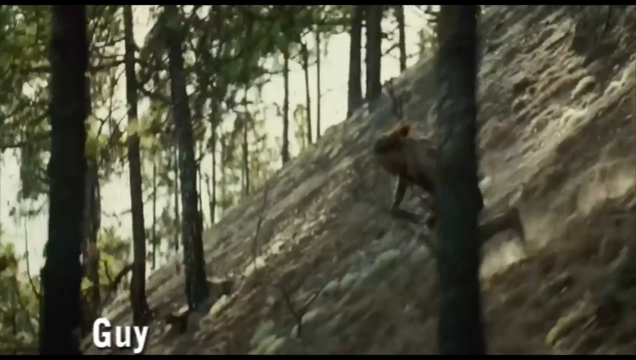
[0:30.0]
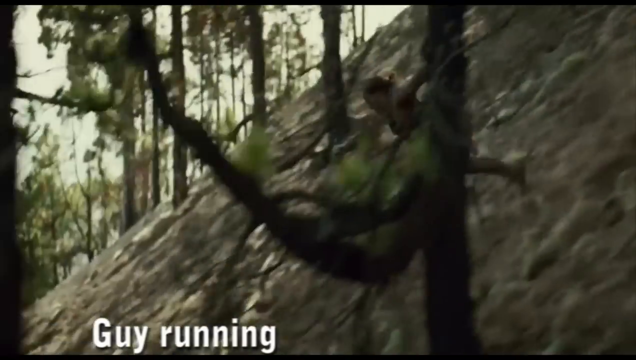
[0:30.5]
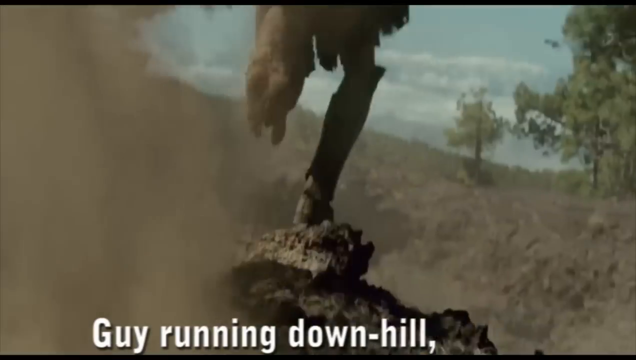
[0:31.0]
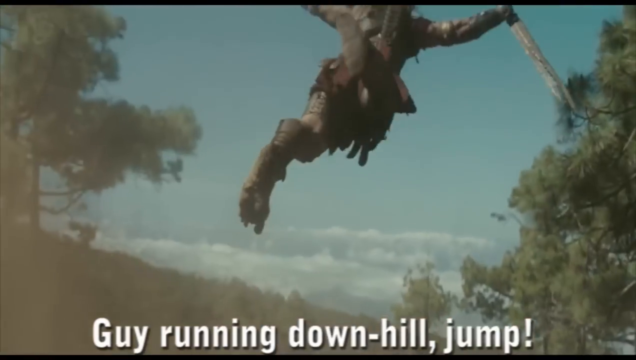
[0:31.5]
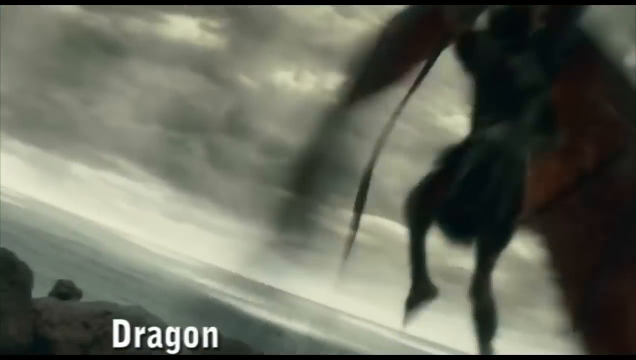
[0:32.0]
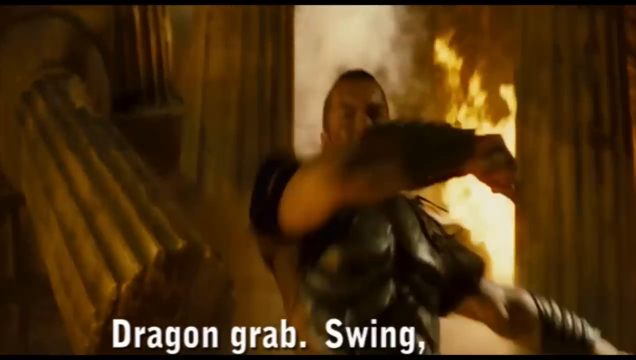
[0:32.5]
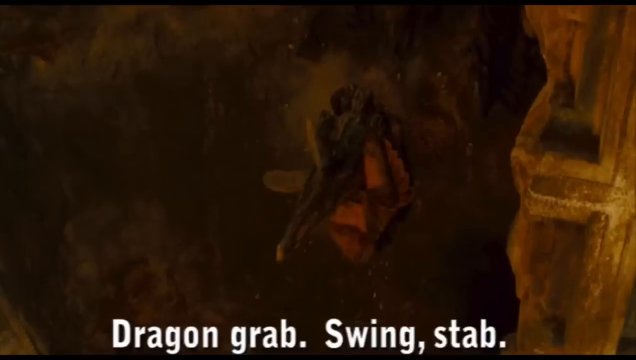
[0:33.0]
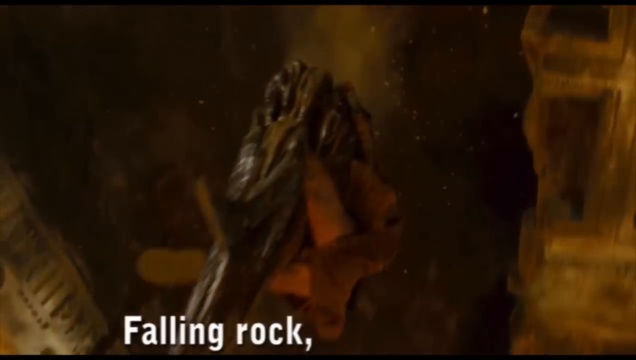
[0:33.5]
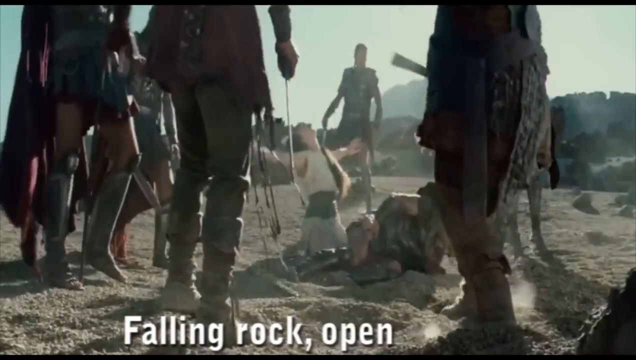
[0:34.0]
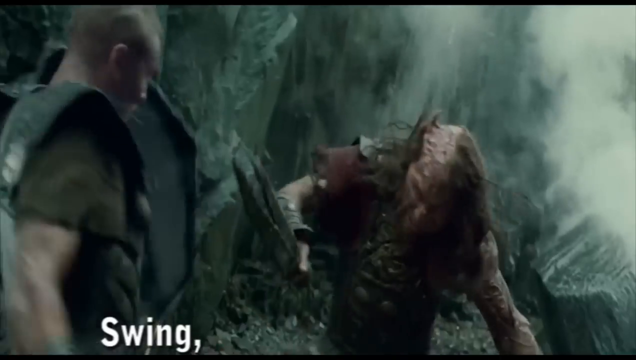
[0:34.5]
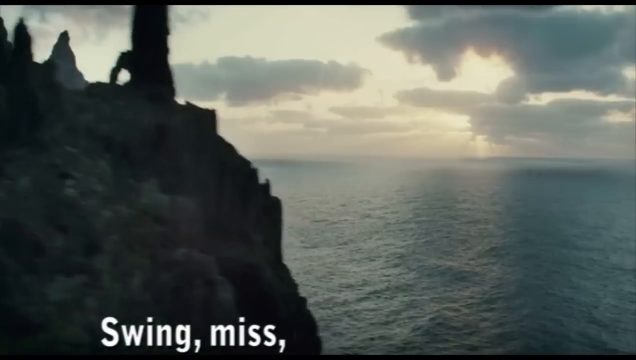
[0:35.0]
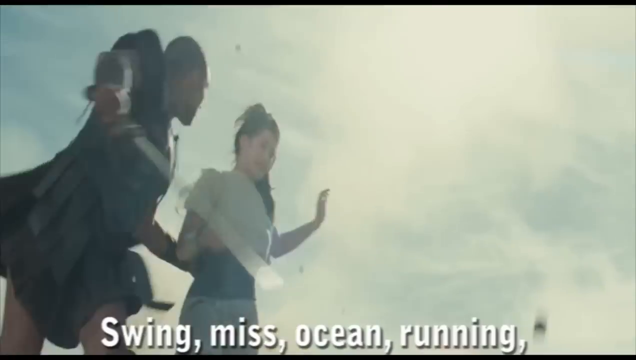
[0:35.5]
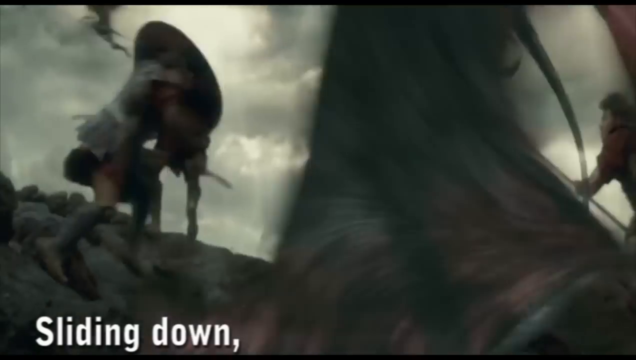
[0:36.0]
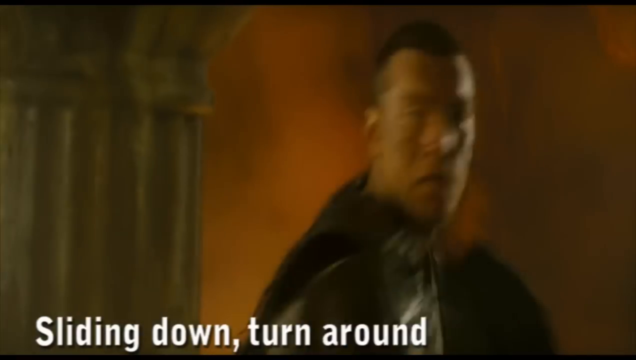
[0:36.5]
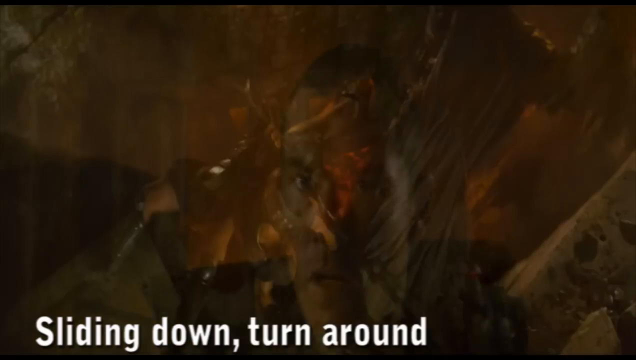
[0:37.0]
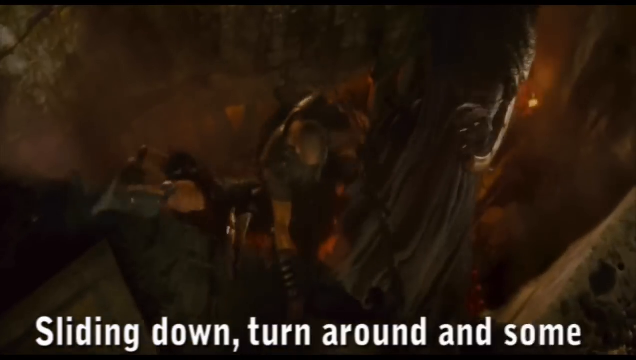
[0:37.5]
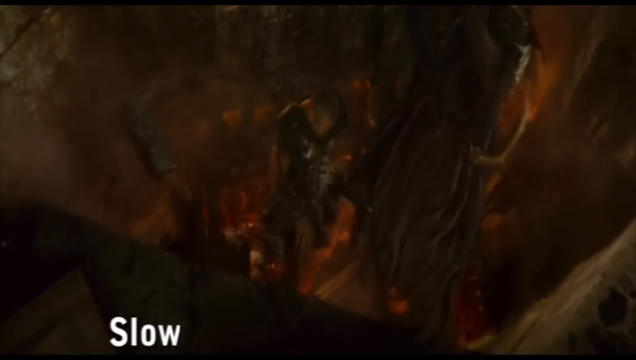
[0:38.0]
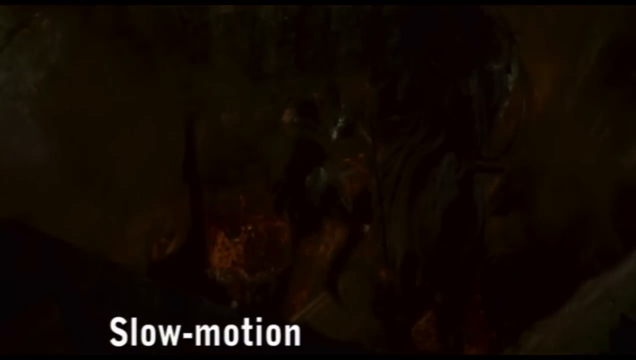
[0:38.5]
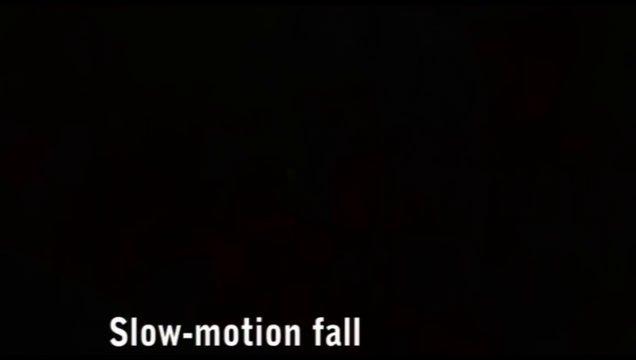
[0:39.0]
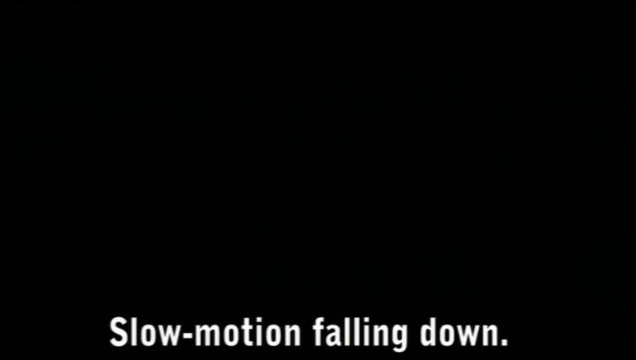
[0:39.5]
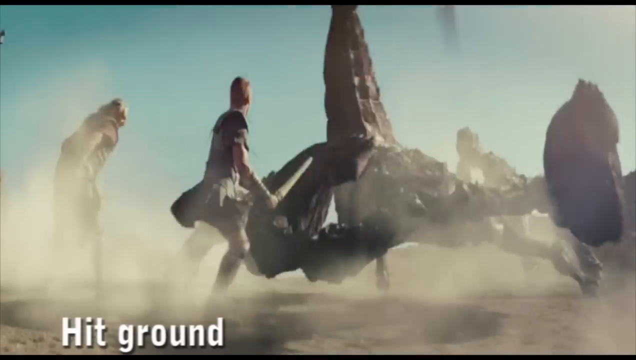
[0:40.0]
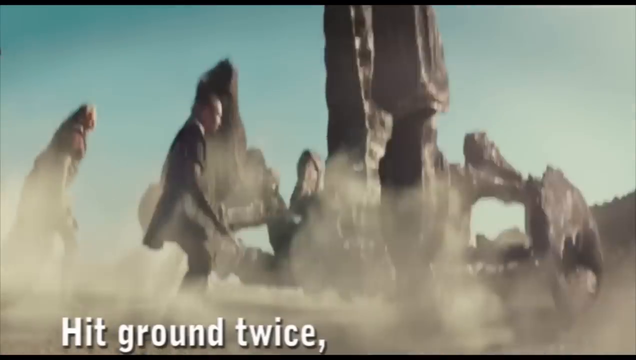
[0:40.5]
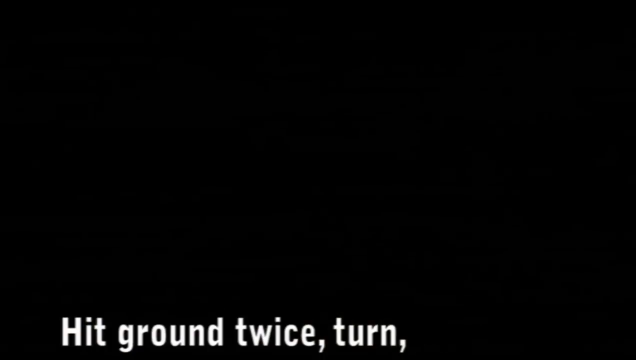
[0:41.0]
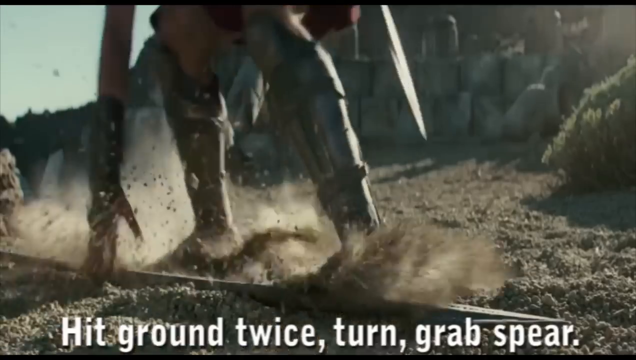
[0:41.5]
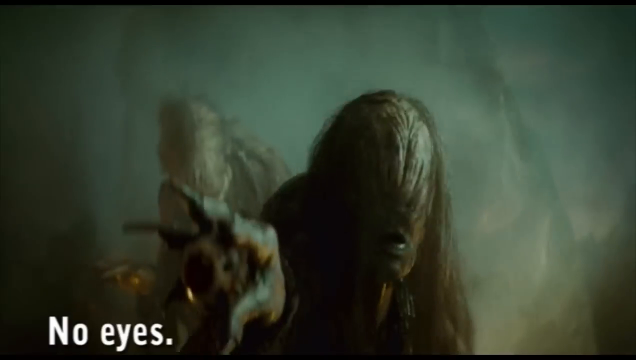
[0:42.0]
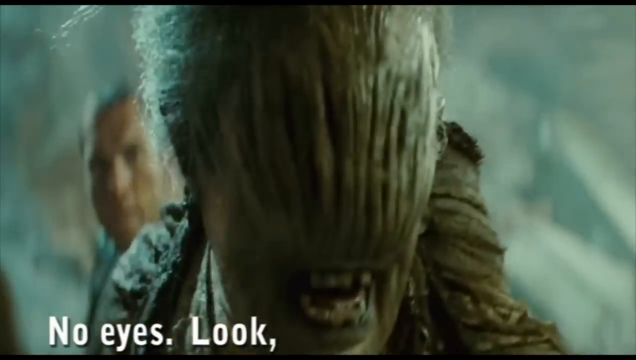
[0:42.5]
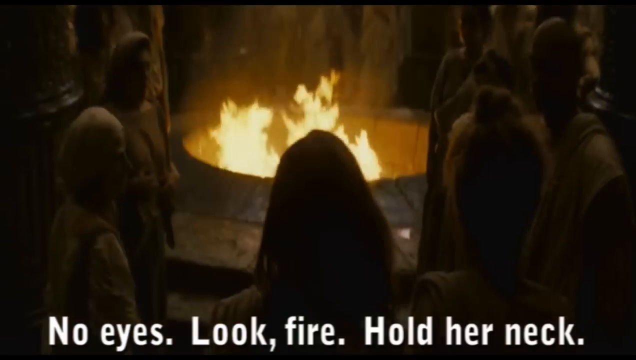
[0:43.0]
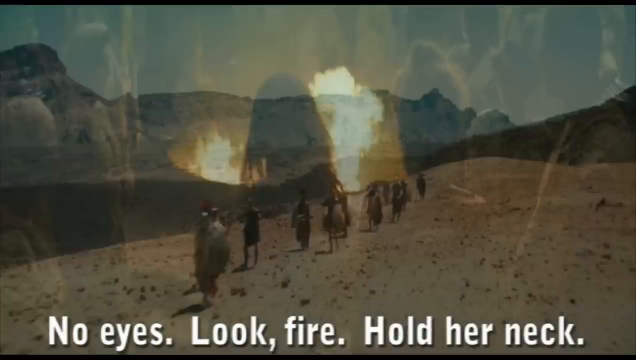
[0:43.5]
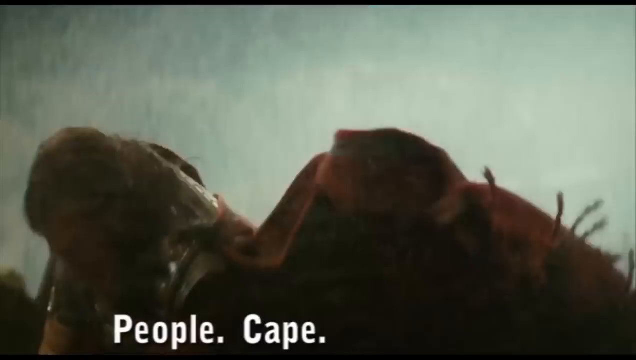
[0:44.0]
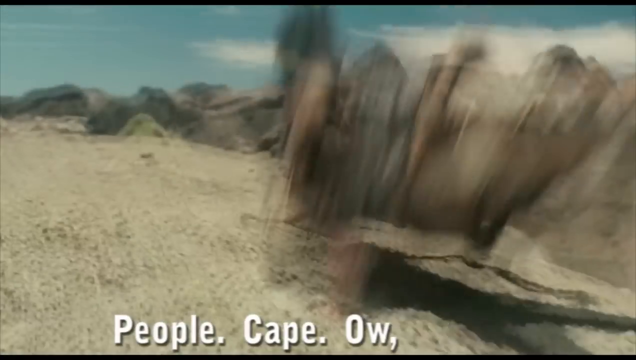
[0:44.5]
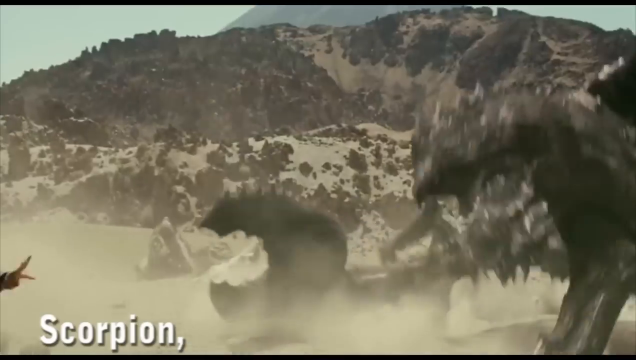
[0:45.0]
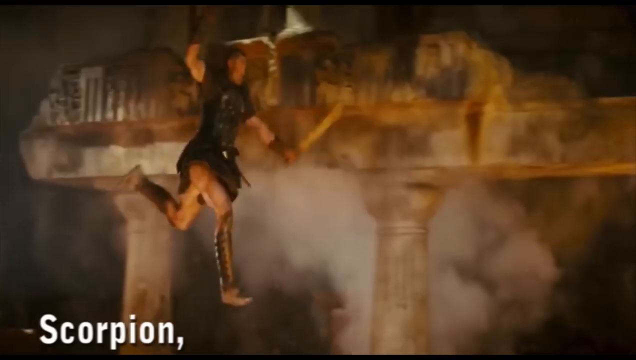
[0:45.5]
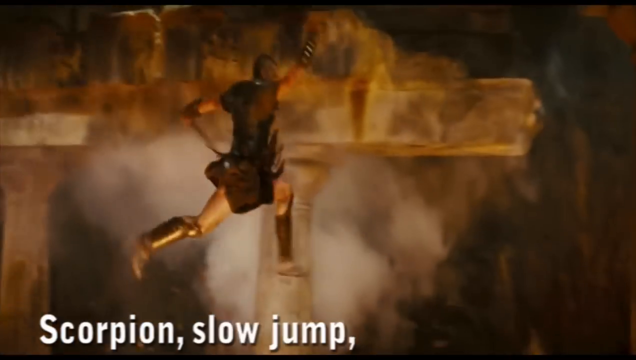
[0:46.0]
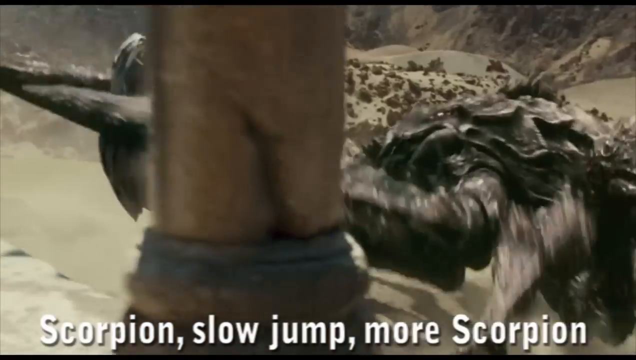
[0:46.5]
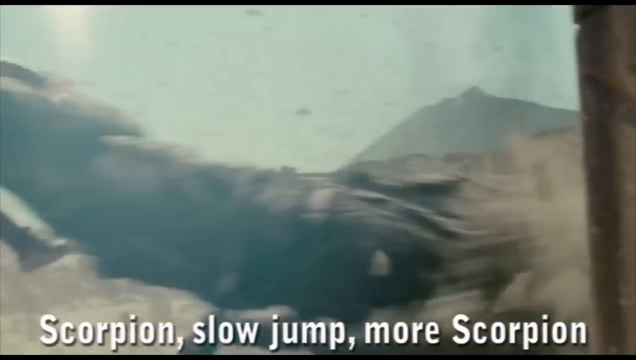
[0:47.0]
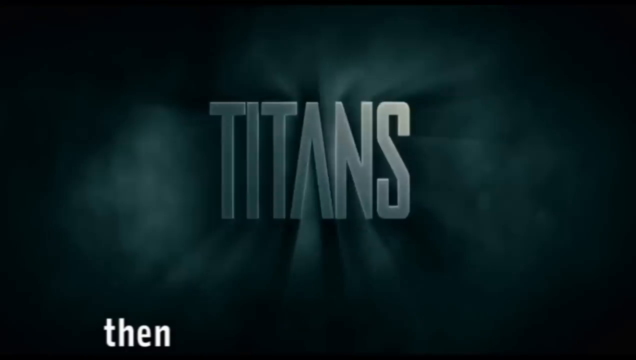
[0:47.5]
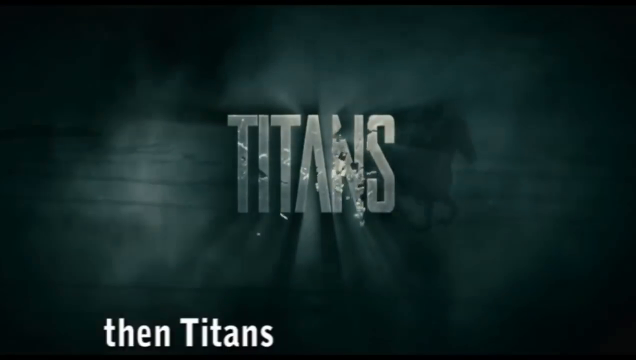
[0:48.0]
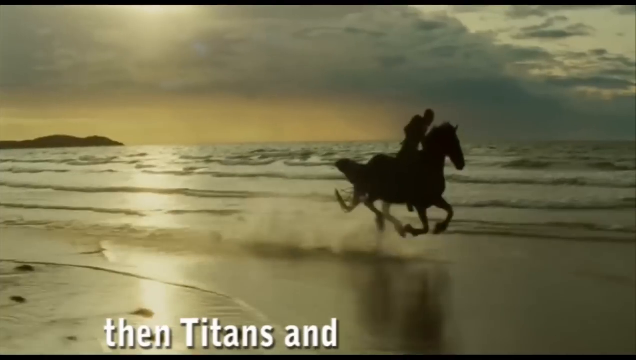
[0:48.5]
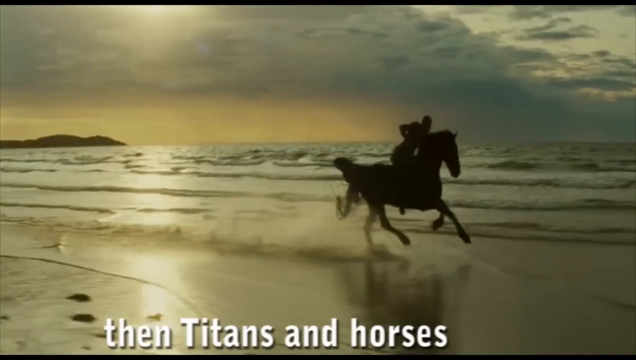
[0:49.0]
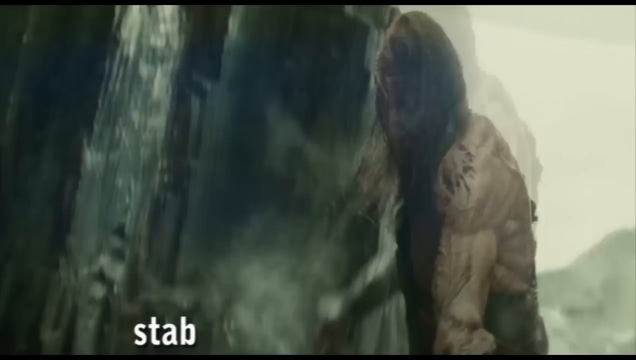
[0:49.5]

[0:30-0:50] A man runs downhill in a forest surrounded by lots of trees, leaps, and transforms into a dragon with a tail and wings in the sky. The dragon grabs a soldier with its feet. A man swings a sword, and then a man with flowing hair wearing a white garment appears. A woman in a white gown is on the floor; she raises her head and stretches out both hands. A man with a disfigured face attempts to strike another man with a sword but misses as the man shrugs away from it. An overview of an ocean and a mountainous area follows, then a man holding a sword runs with a woman wearing a white dress. A group of soldiers on a battlefield is swarmed, and a man turns over as he stands close to a pillar, looking very scared. Three men fall into a pit as the screen blacks out. A huge scorpion strikes its tail around some warriors but misses. The video quickly fades to the face of a monster and shows fires in very fast motion. A human fights a giant crab-looking monster, which grabs the human with its big claws and pushes the human against a wall. The scene switches to a man riding a horse by the waterside as the sun sets, and a man tries to strike with a sword positioned toward the ground.